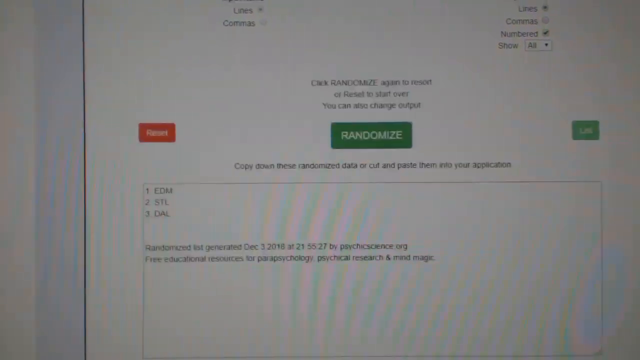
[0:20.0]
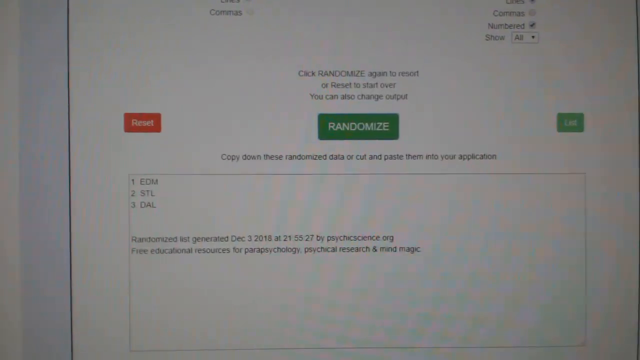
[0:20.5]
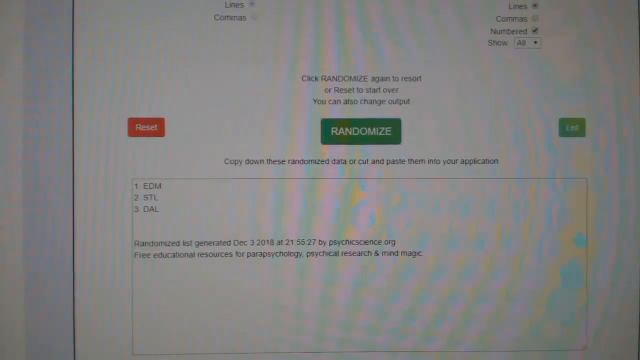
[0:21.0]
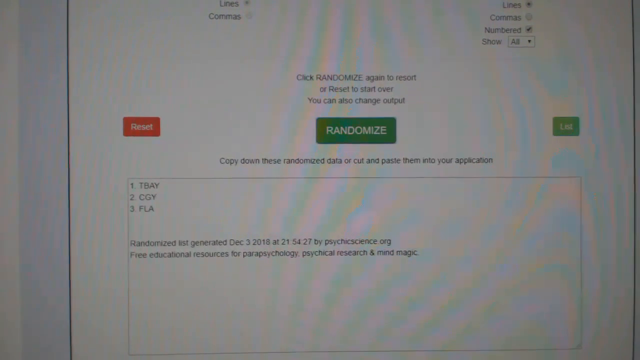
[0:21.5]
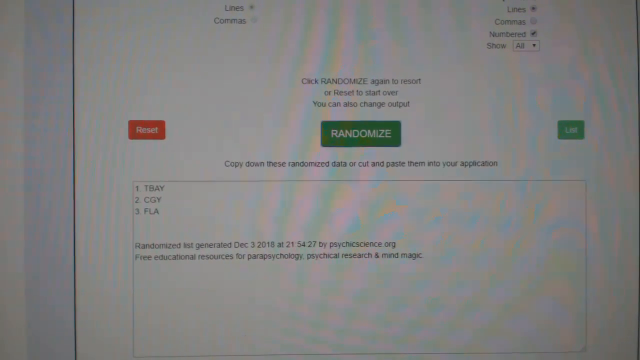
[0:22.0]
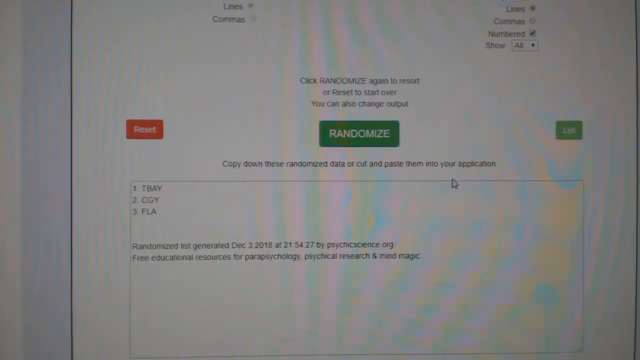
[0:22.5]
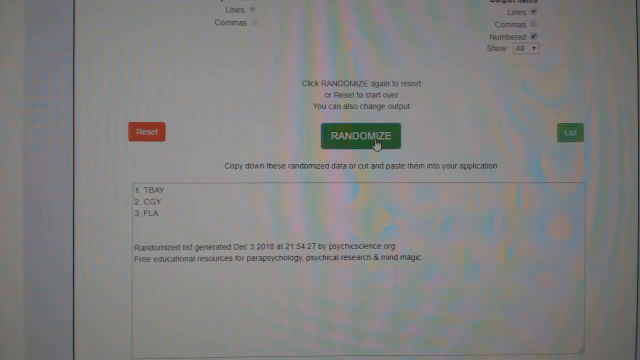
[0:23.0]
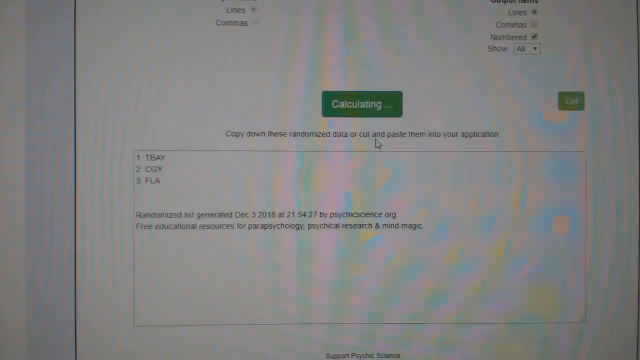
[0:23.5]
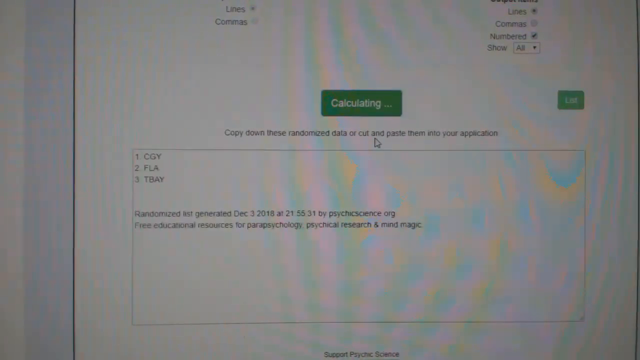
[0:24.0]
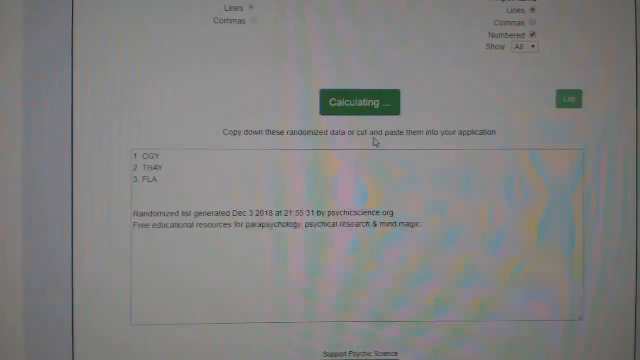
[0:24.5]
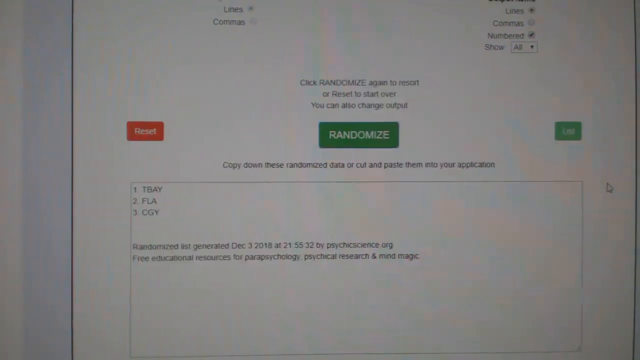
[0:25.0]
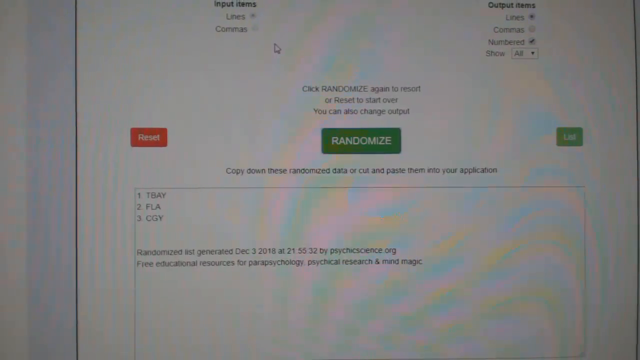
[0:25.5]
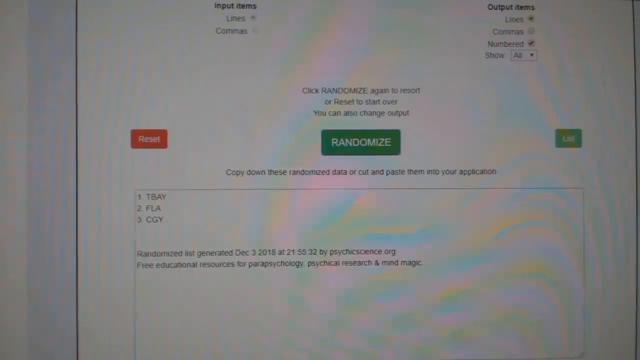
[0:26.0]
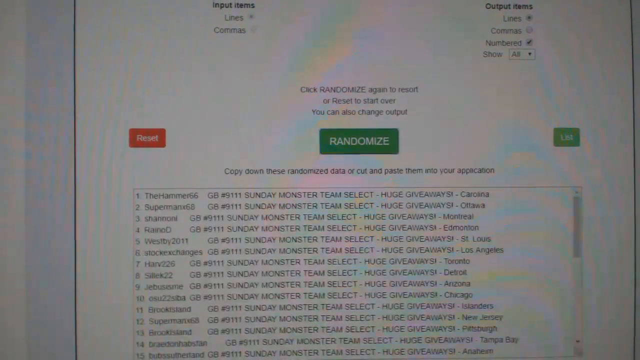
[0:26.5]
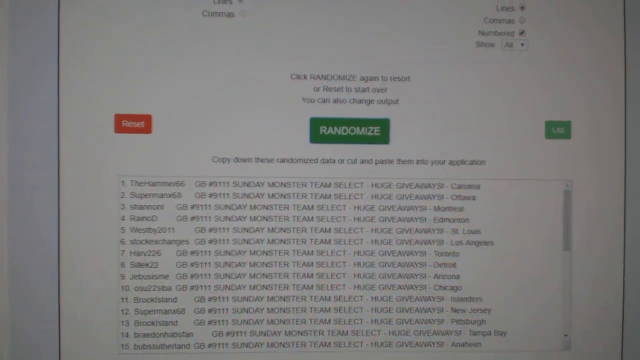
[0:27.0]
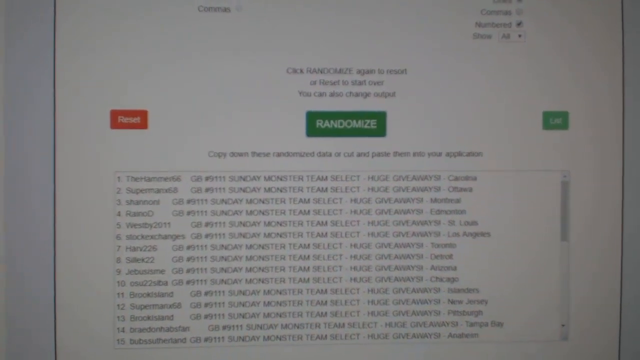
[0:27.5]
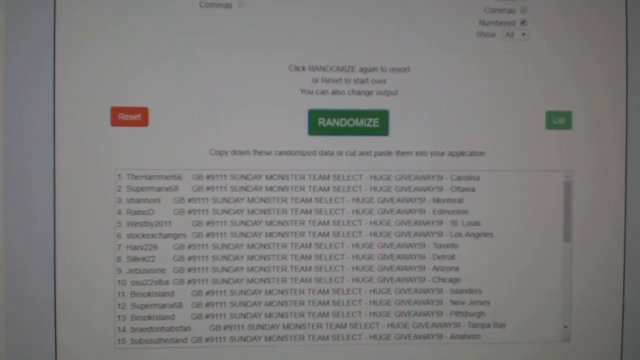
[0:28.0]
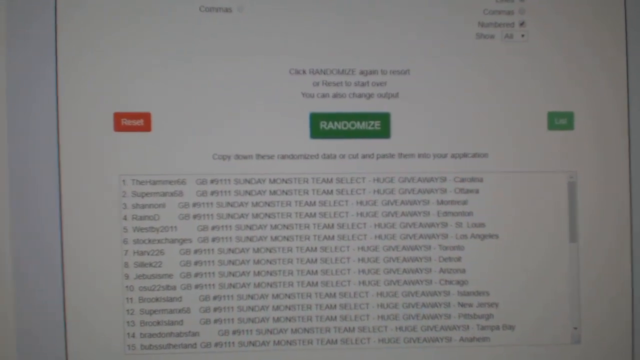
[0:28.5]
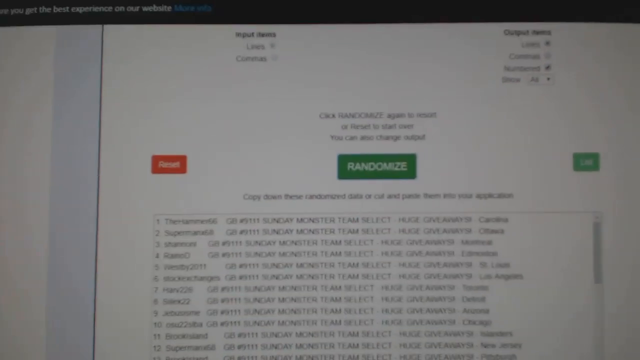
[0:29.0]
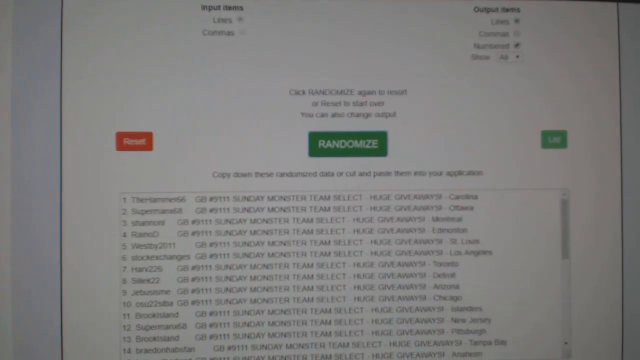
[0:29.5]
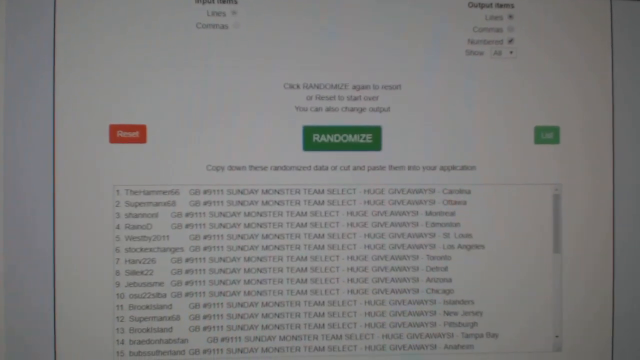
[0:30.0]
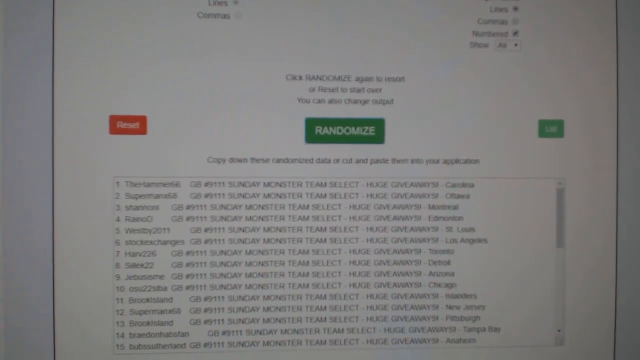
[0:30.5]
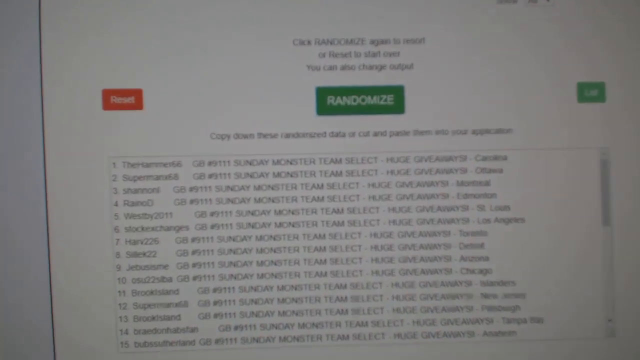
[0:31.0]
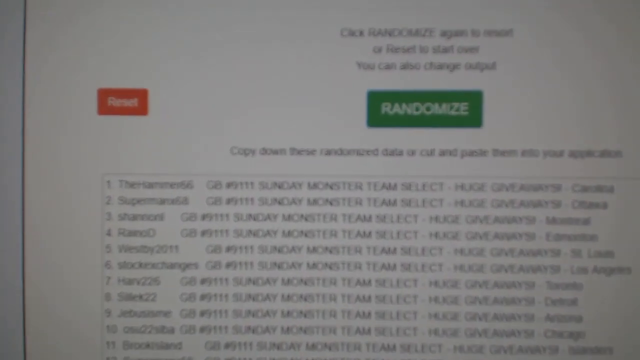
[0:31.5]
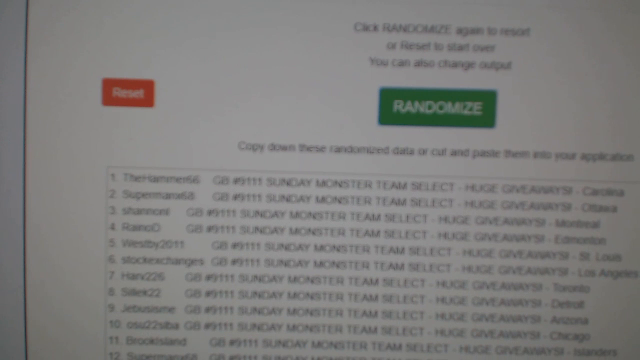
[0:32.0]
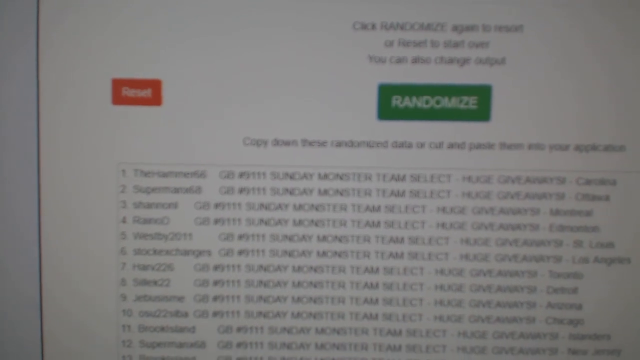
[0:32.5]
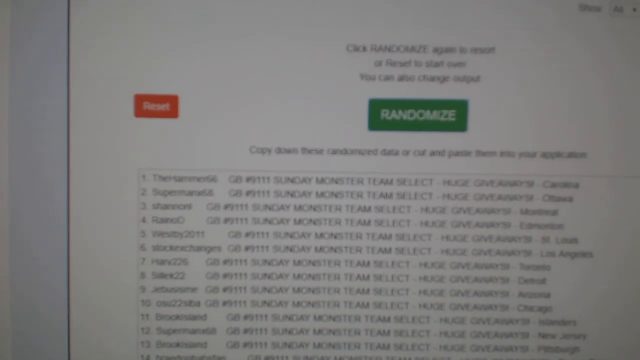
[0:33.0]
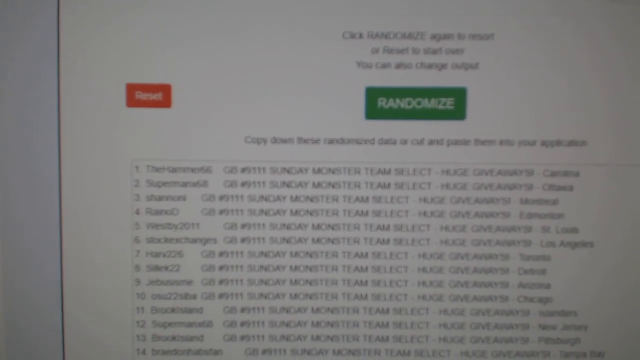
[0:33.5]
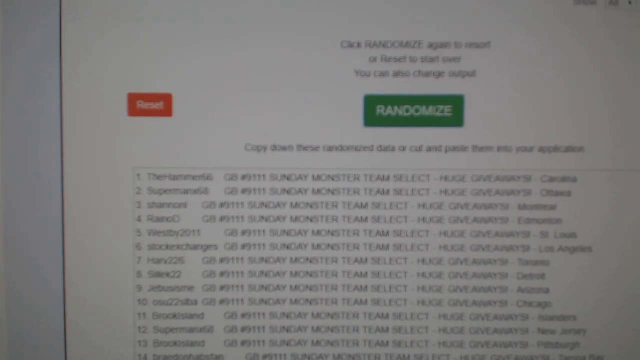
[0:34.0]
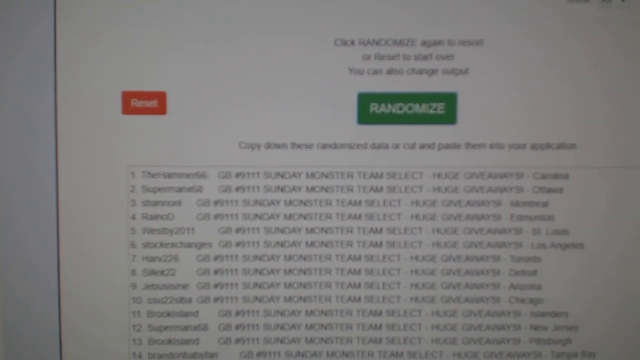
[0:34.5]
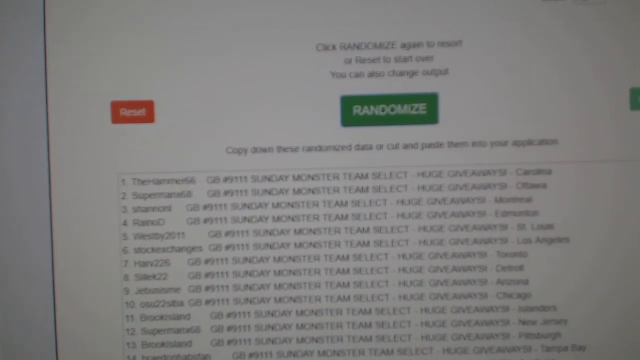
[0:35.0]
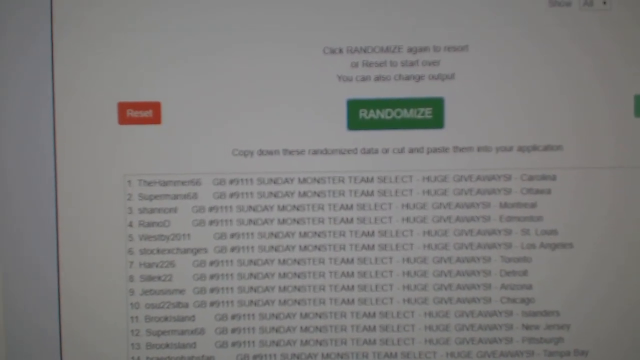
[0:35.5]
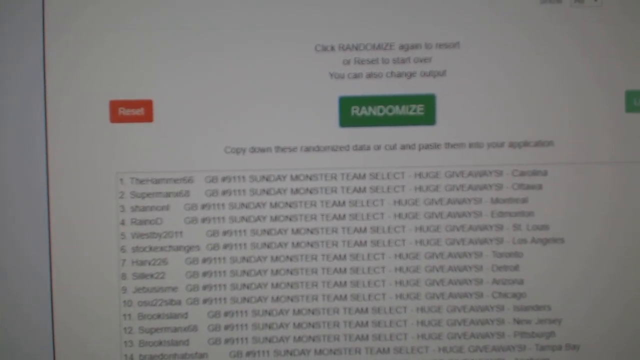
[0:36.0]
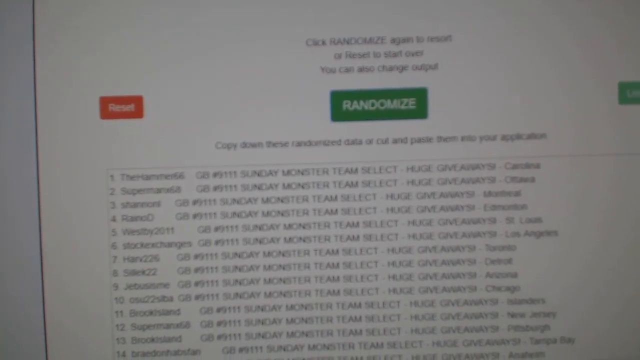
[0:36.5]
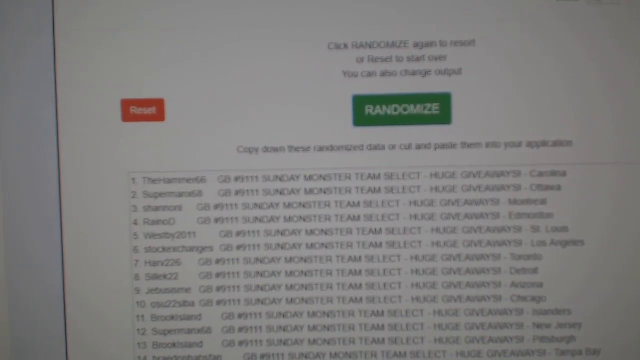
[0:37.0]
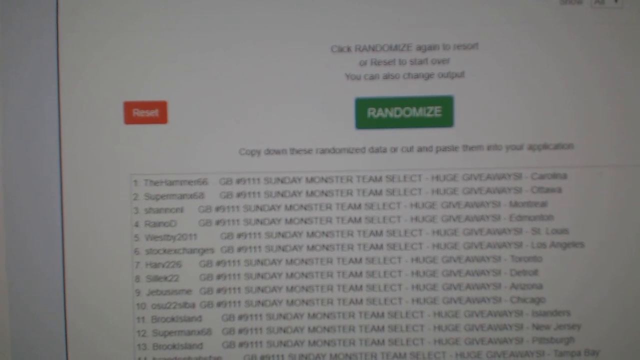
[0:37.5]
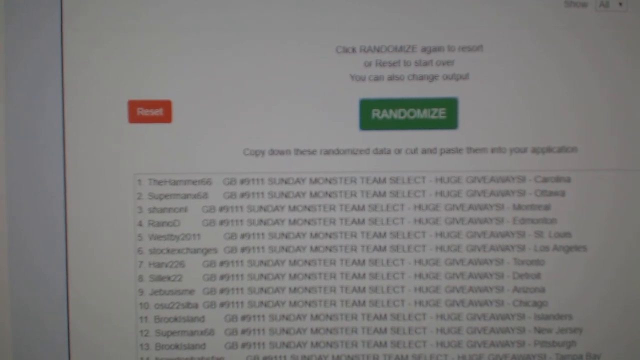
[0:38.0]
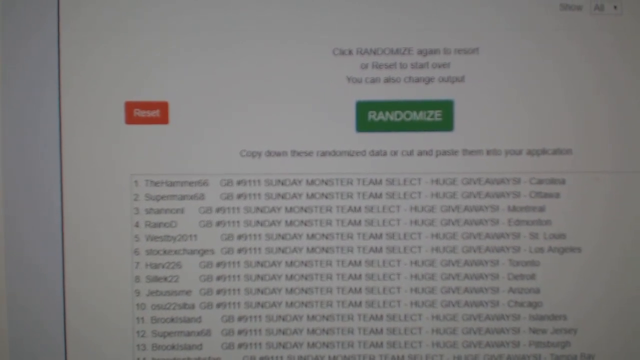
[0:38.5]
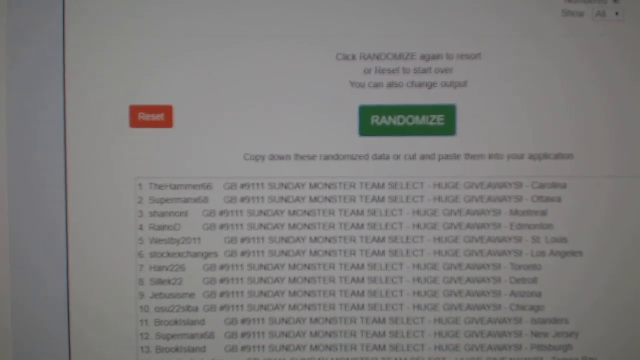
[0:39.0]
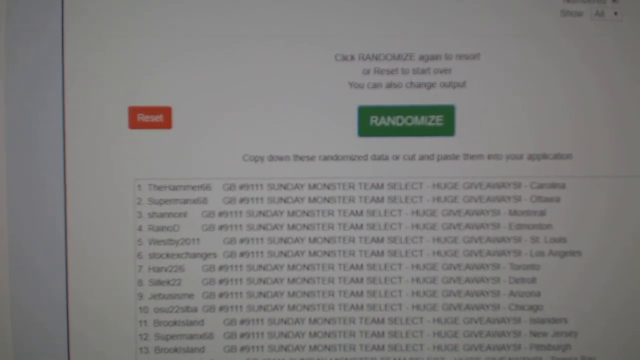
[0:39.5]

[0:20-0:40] The shaky camera faces a desktop whose page shows three prominent tabs: on the left a red tab that says "Reset," in the middle a green tab that says "Randomize," and on the right a green tab that says "List." The text box below reads "1TBAY, 2CGY, and 3FLA." The user moves the mouse cursor over the Randomize tab and clicks it, changing the list to "1 TBA, 2 FLA, and 3 CGY." A long list of text then pops up, with at least 15 data points below the Randomize tab. The view zooms in toward the text box for a closer look at its contents, but the text is still slightly blurry because the camera is shaking, so it cannot be clearly read.